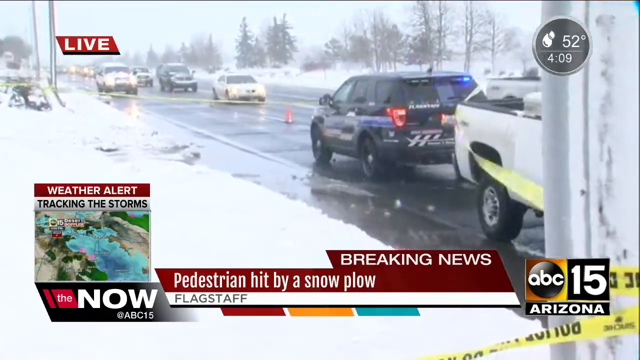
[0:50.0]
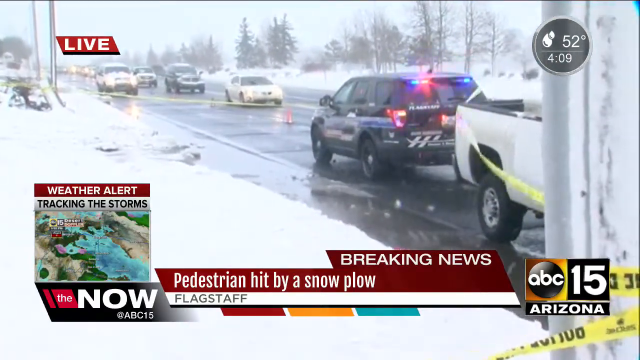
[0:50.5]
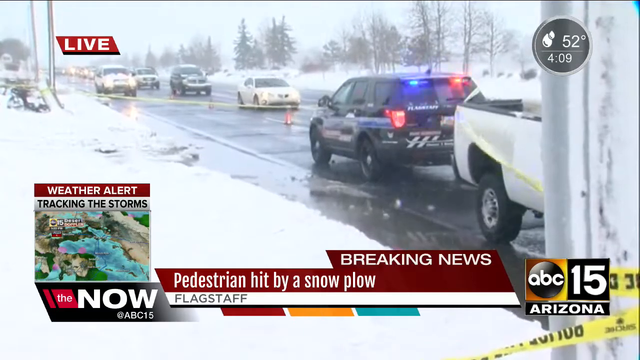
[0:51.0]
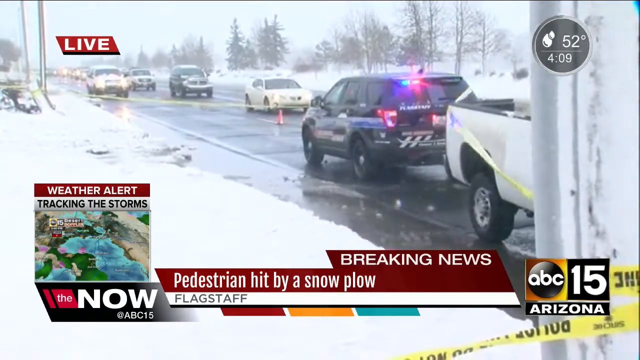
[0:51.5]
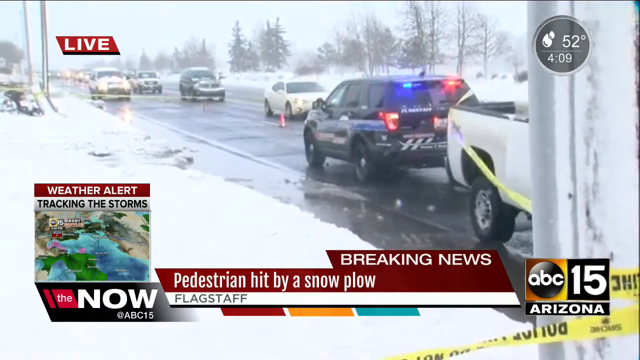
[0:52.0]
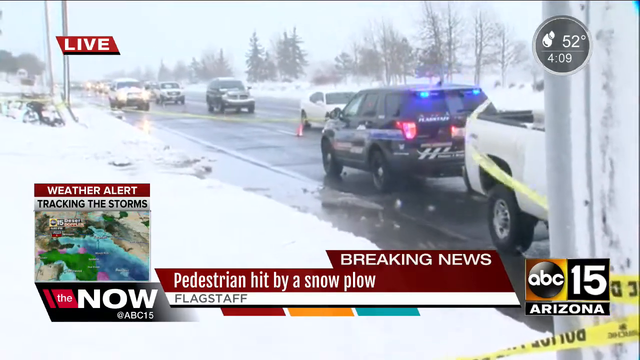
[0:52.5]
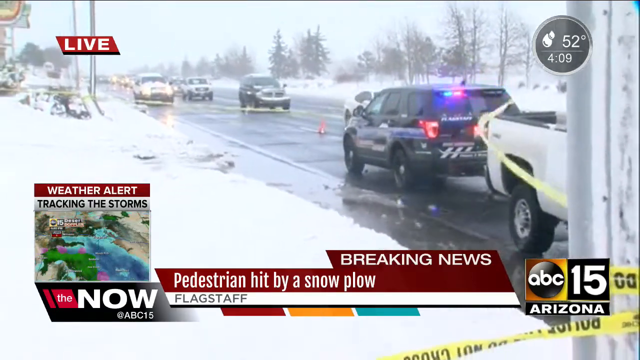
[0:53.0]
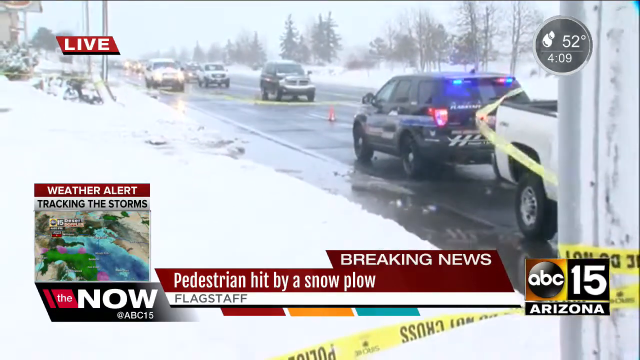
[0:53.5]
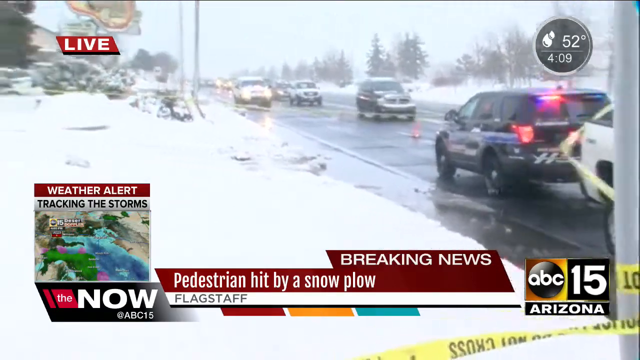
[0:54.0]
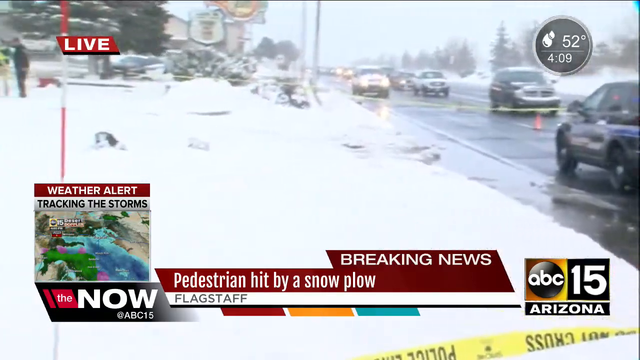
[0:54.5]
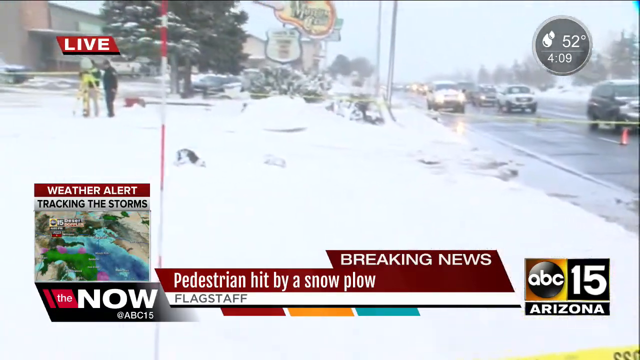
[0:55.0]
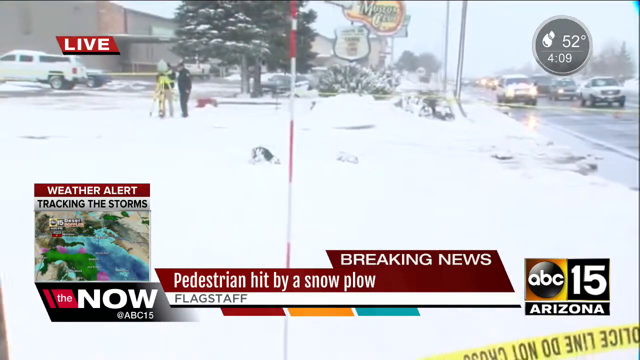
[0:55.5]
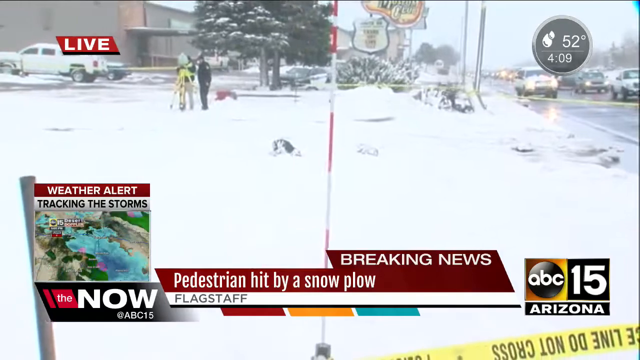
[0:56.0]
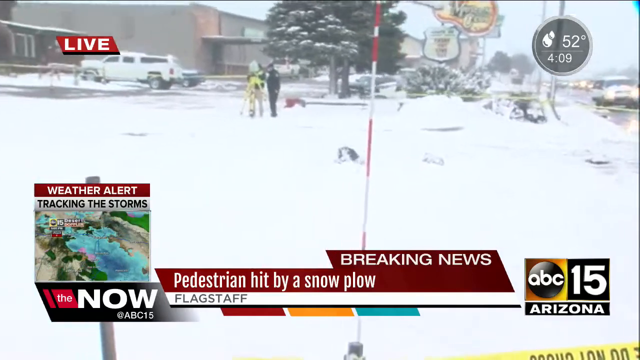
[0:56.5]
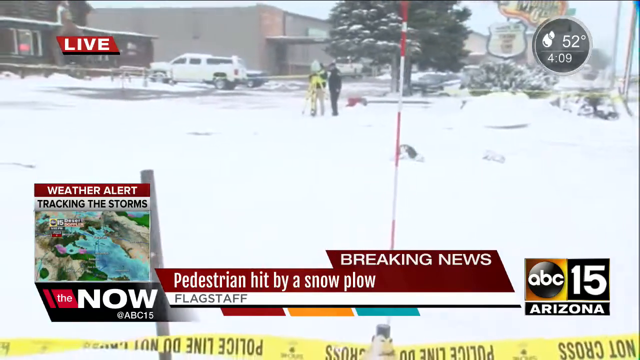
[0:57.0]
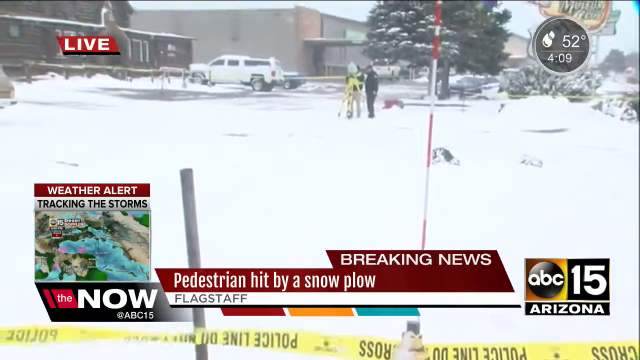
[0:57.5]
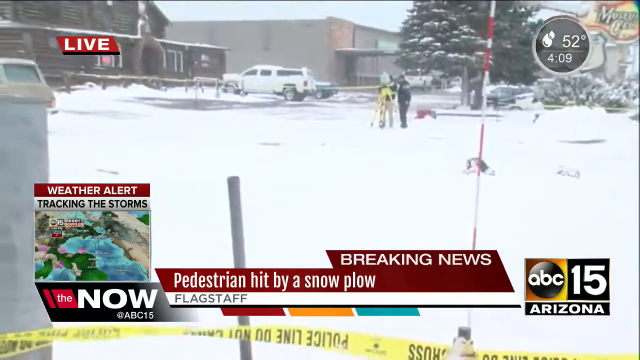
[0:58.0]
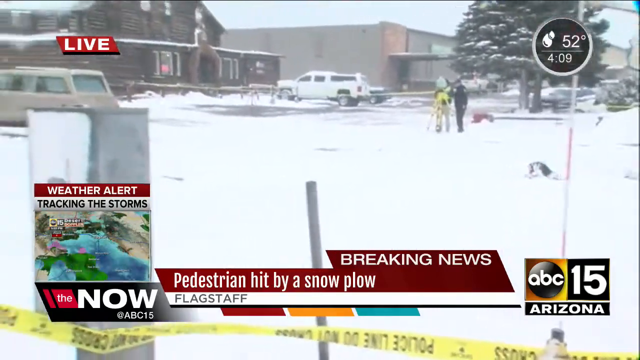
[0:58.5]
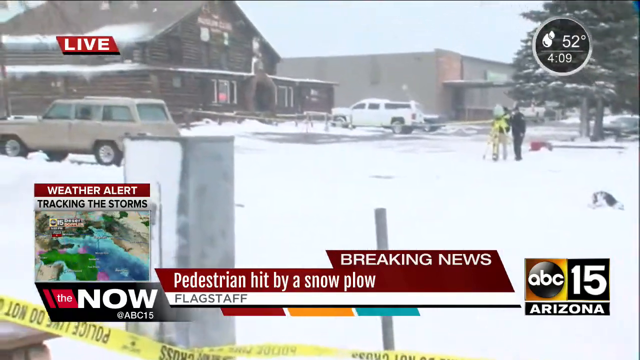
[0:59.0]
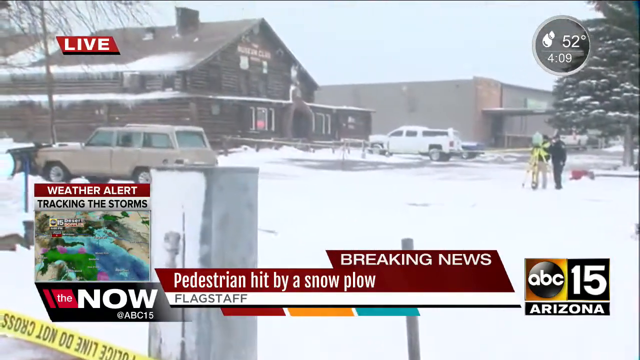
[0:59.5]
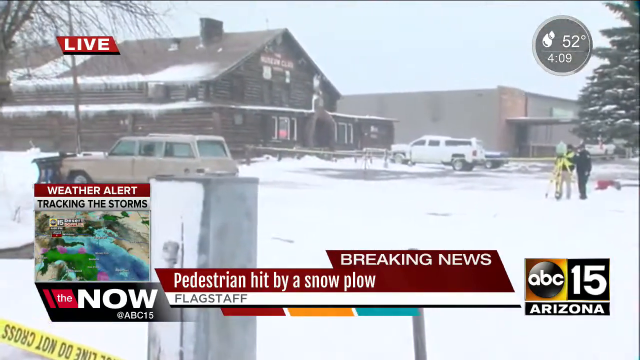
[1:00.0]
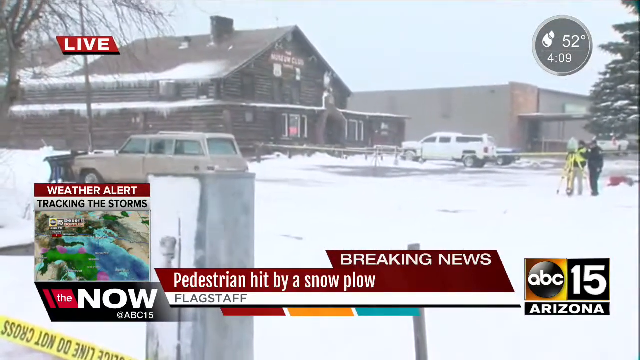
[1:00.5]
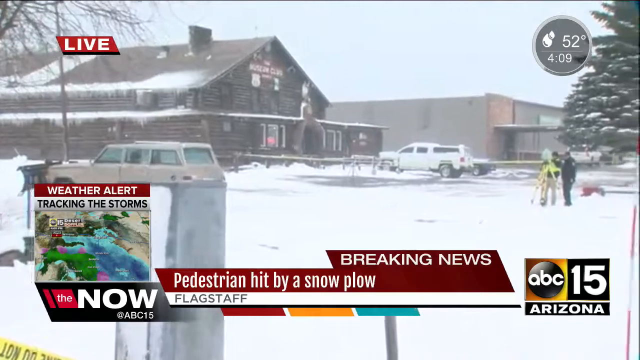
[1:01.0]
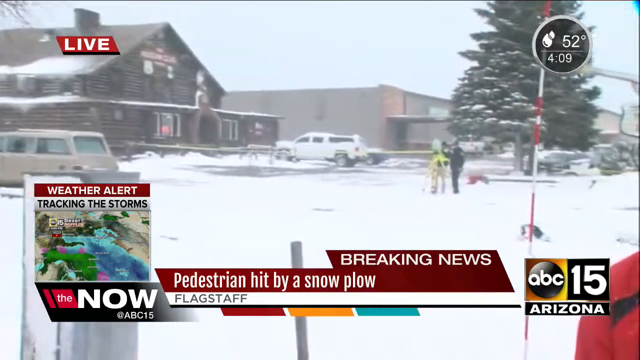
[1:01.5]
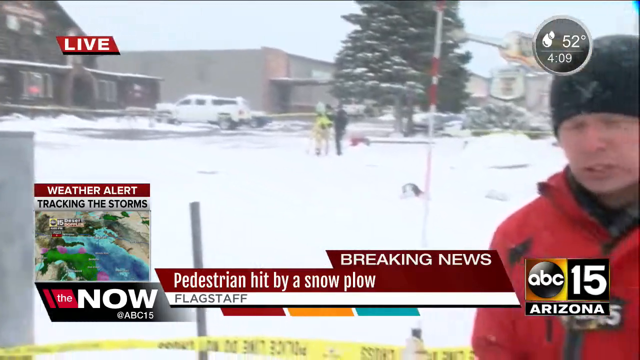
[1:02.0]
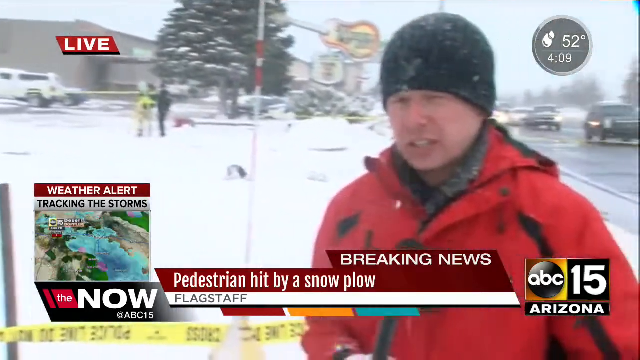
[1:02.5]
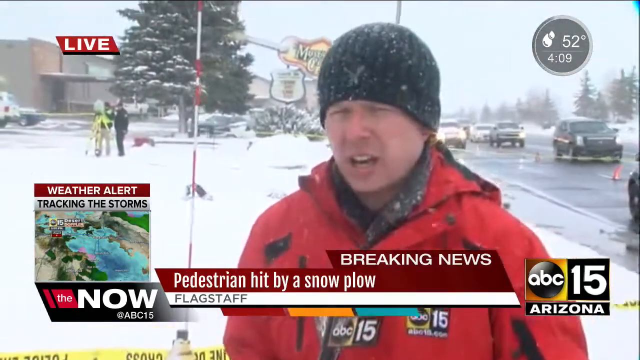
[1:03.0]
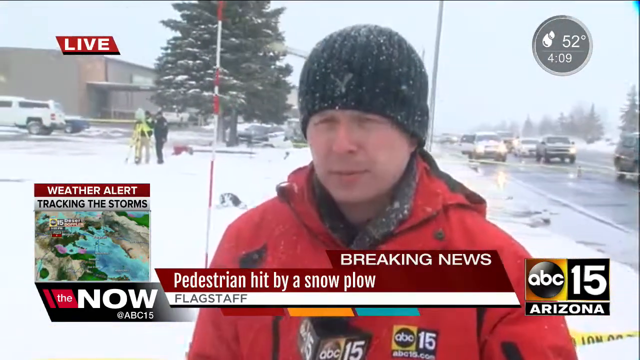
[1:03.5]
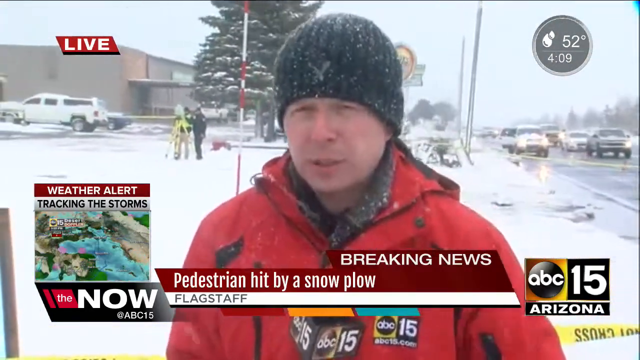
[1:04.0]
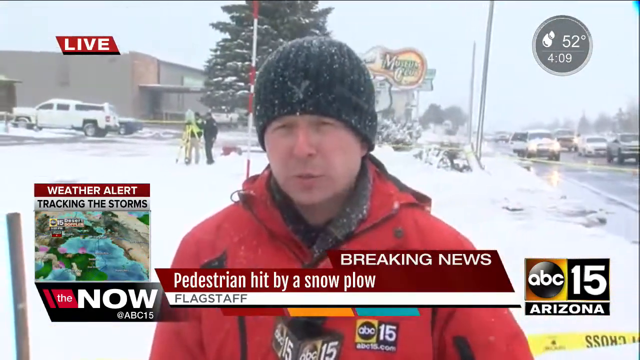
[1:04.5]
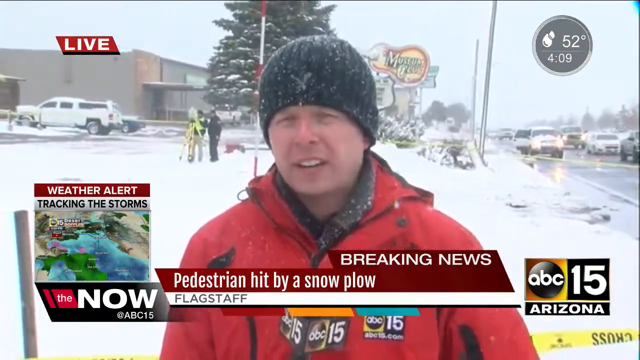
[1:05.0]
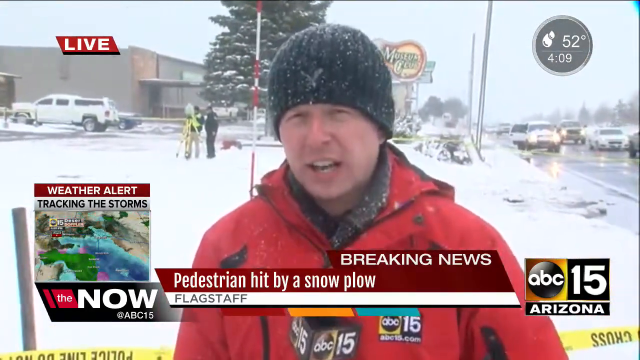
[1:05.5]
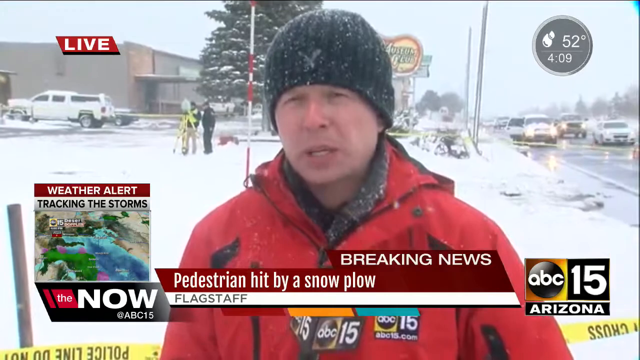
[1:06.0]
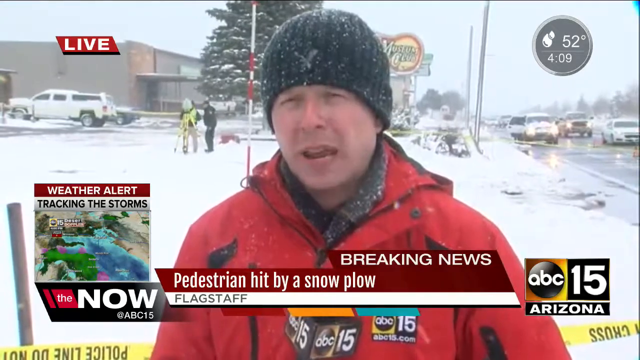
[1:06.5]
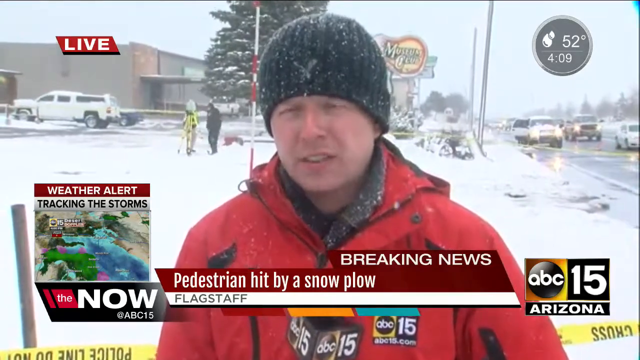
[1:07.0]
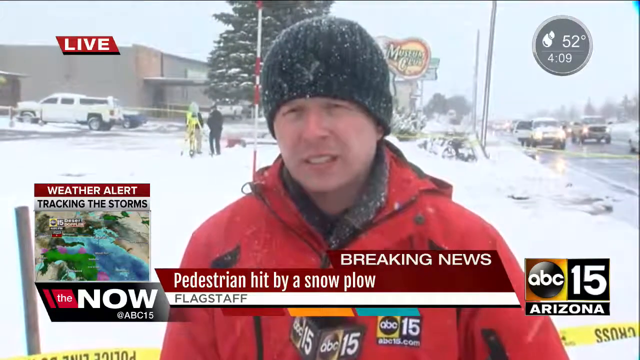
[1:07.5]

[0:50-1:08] The coverage remains at the scene of the accident where a snowplow hit a pedestrian in Flagstaff, Arizona. The scene is marked off with a lot of yellow caution tape, and there are also some cones. A police cruiser is on scene with its lights going, and a police officer is with someone who seems to be surveying the site. The cameraman kind of goes over the whole scene, showing an older model sedan with something like a snowplow on the front that looks like it was clearing this parking lot. It is still actively snowing, everyone is dressed very warmly, and there is a lot of snow on the ground. The small clip of a weather alert tracking storms around the Arizona area is still up, and the camera pans back and forth between the news anchor and the vehicle.